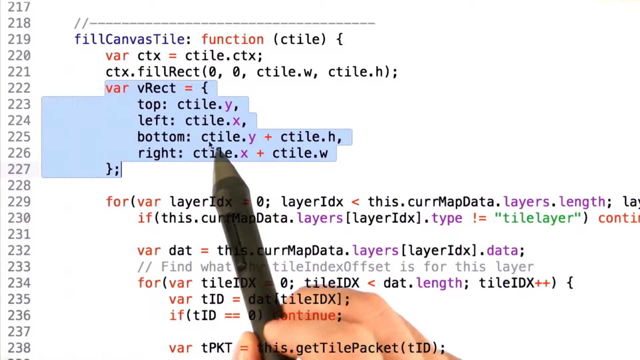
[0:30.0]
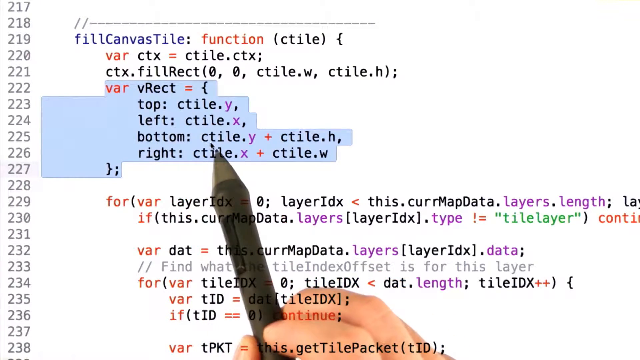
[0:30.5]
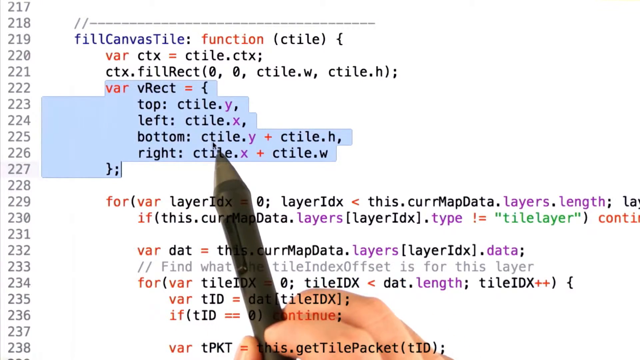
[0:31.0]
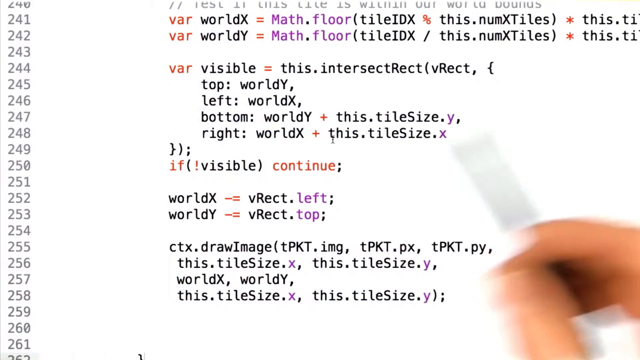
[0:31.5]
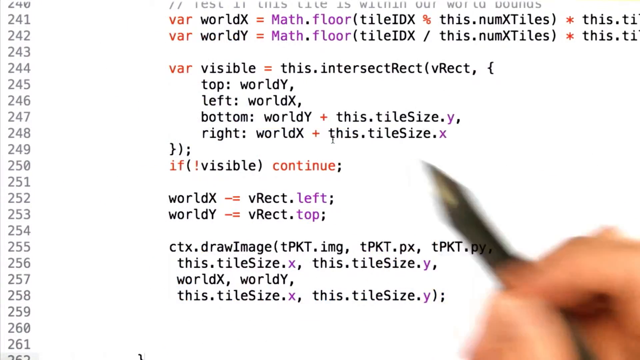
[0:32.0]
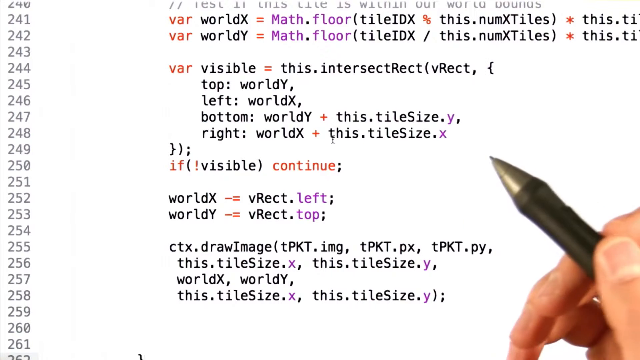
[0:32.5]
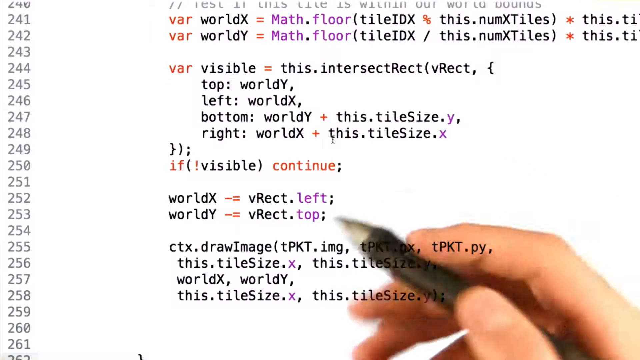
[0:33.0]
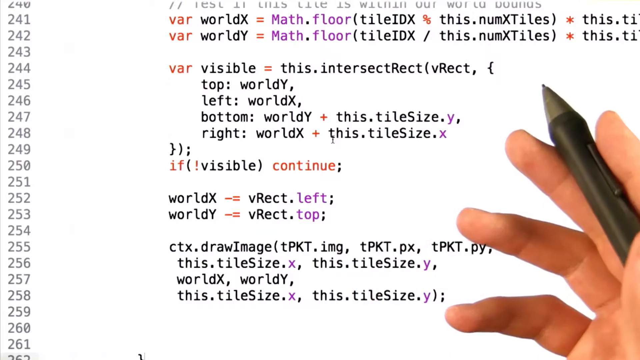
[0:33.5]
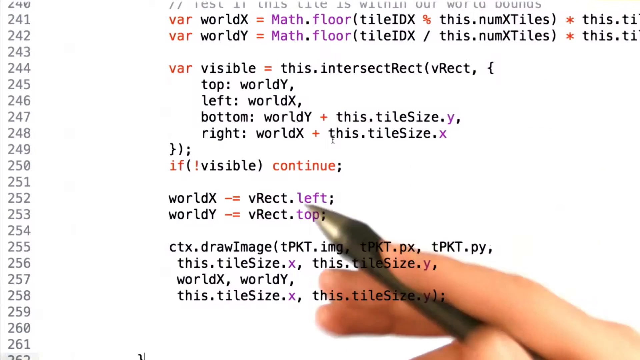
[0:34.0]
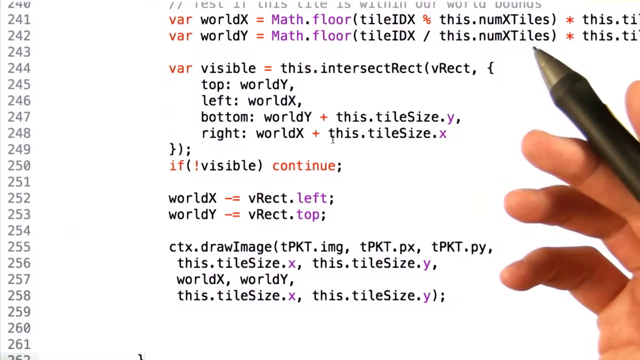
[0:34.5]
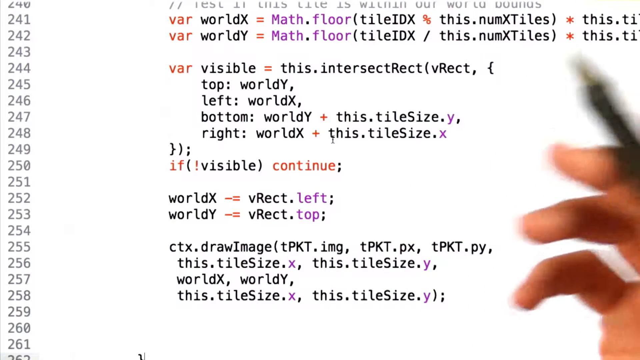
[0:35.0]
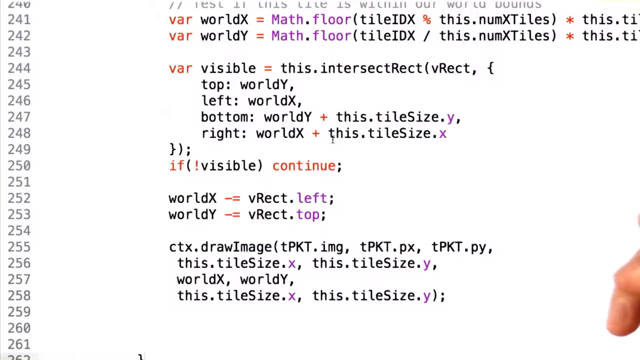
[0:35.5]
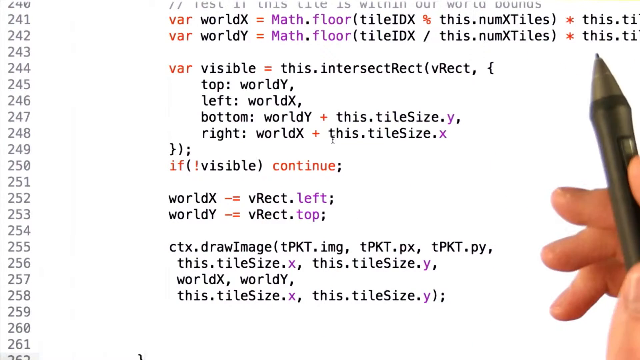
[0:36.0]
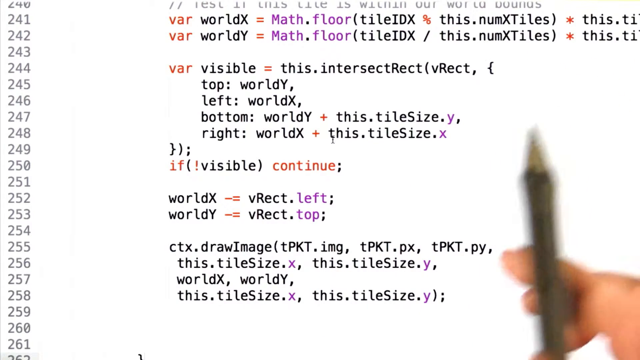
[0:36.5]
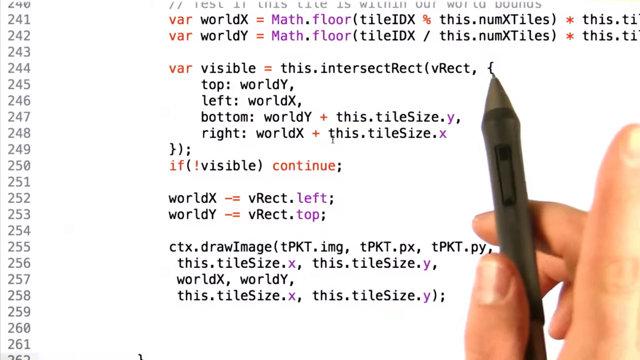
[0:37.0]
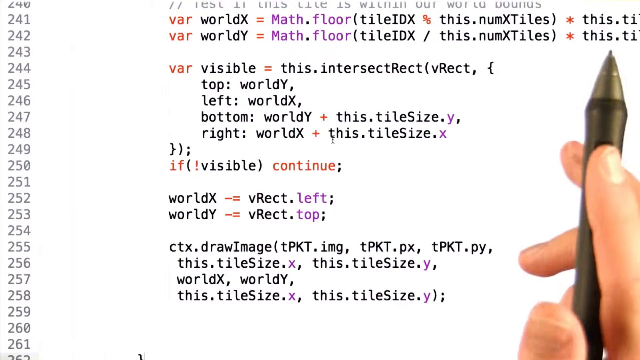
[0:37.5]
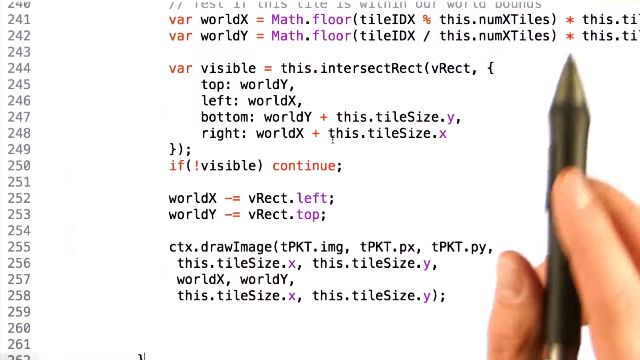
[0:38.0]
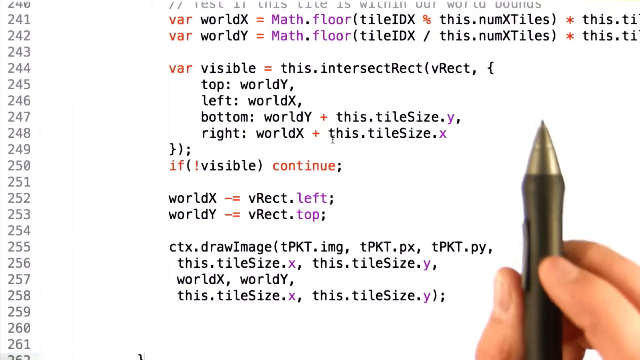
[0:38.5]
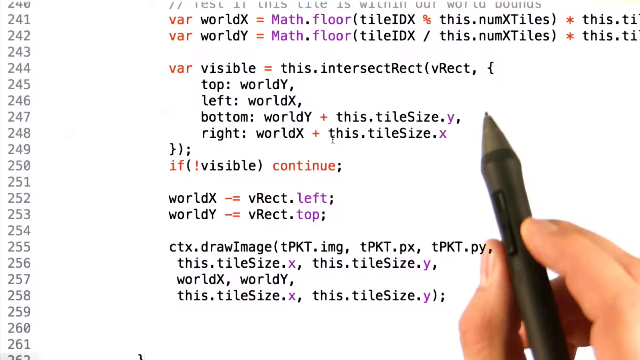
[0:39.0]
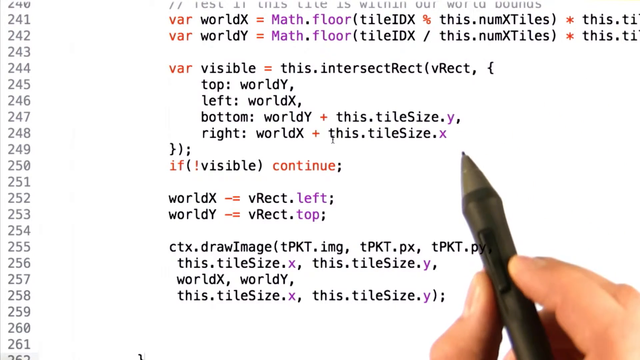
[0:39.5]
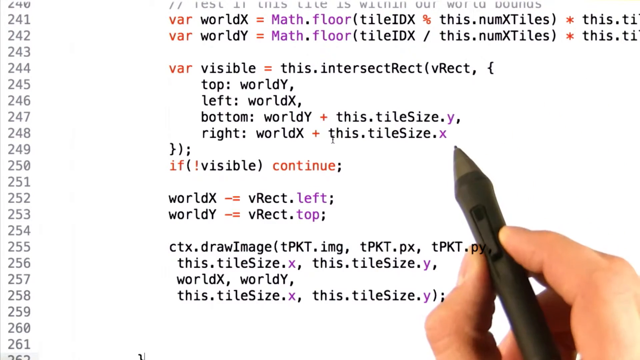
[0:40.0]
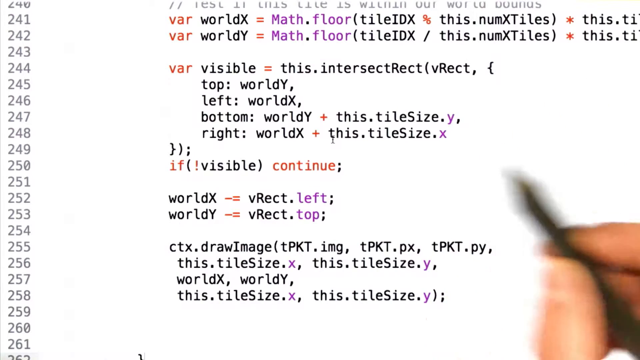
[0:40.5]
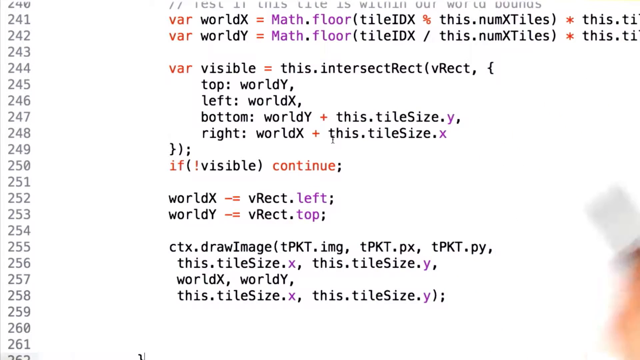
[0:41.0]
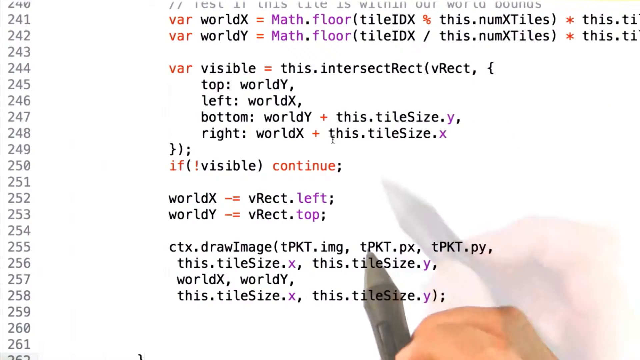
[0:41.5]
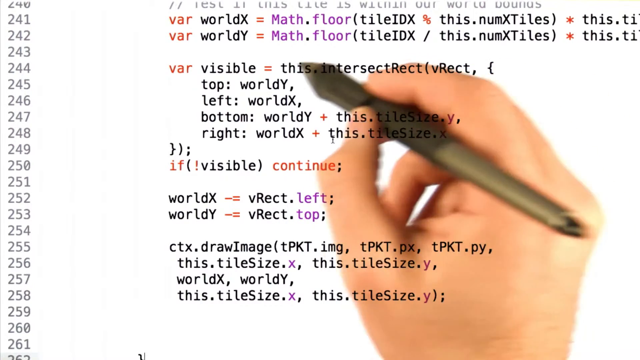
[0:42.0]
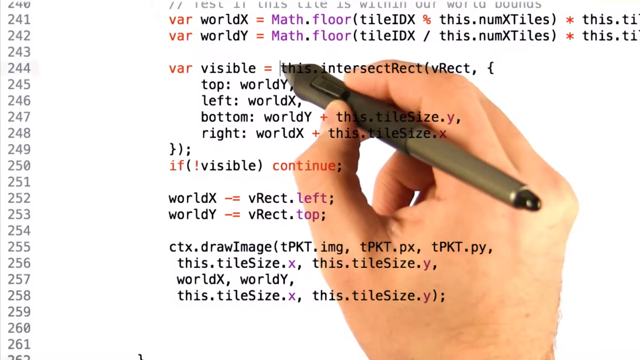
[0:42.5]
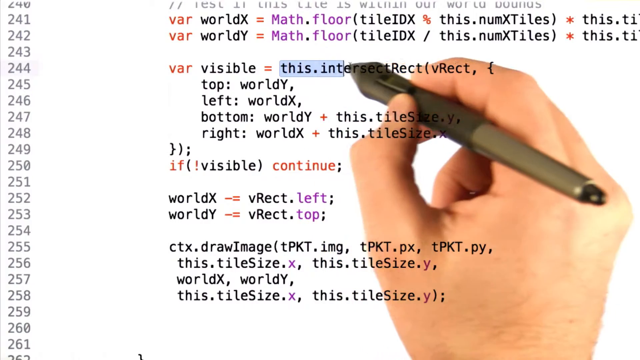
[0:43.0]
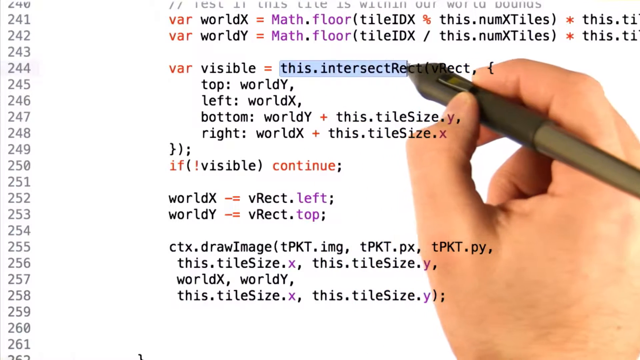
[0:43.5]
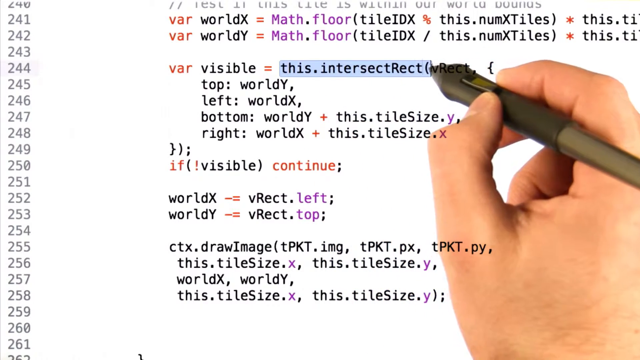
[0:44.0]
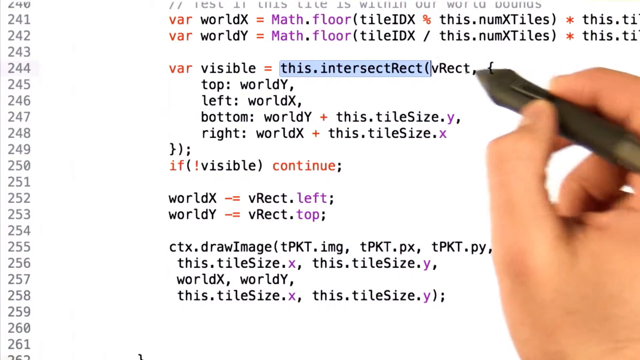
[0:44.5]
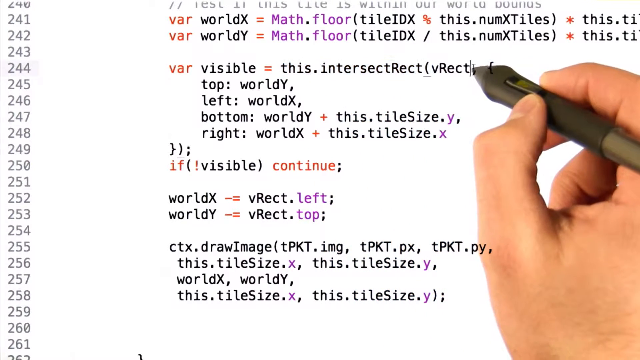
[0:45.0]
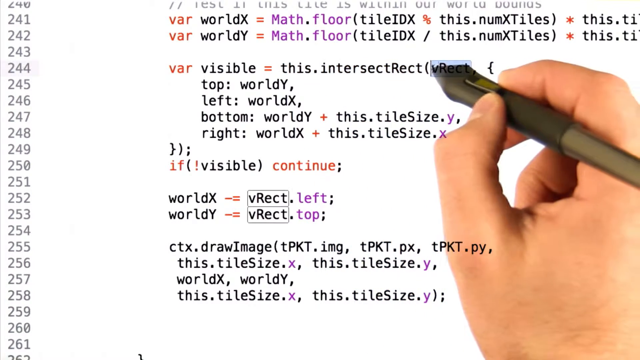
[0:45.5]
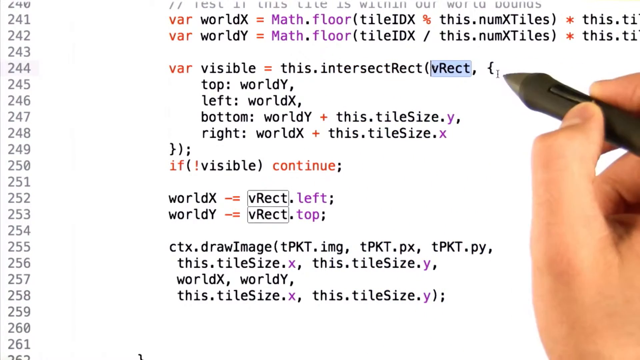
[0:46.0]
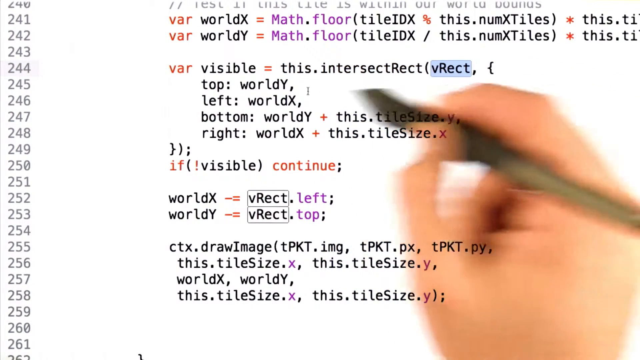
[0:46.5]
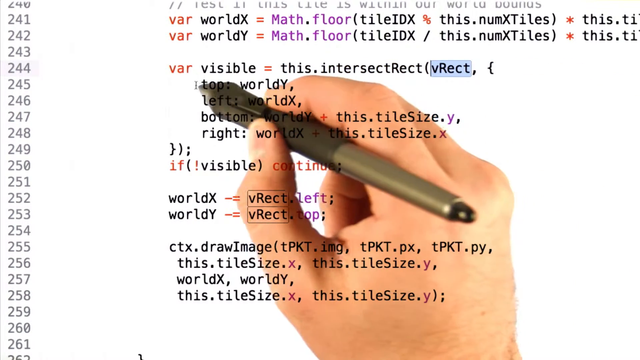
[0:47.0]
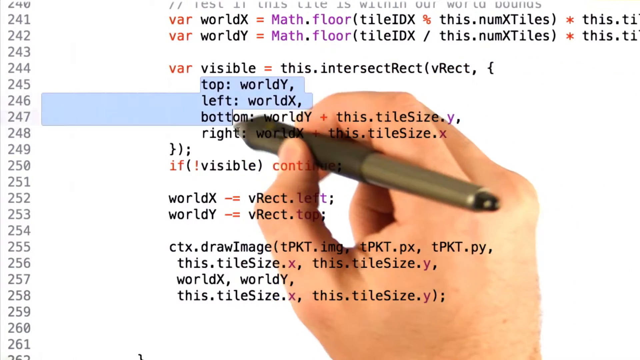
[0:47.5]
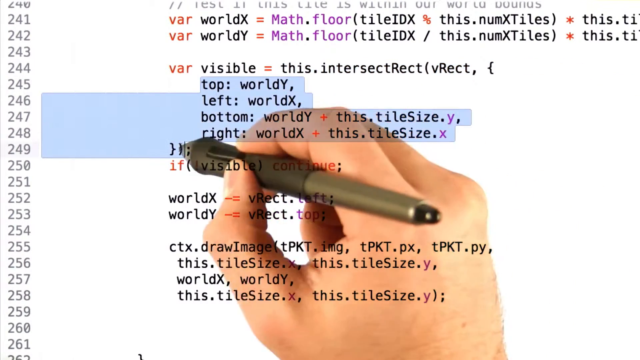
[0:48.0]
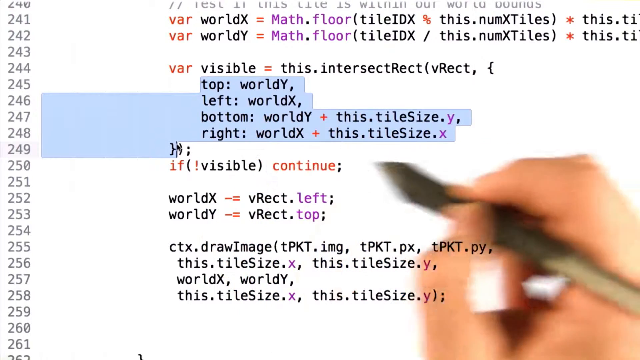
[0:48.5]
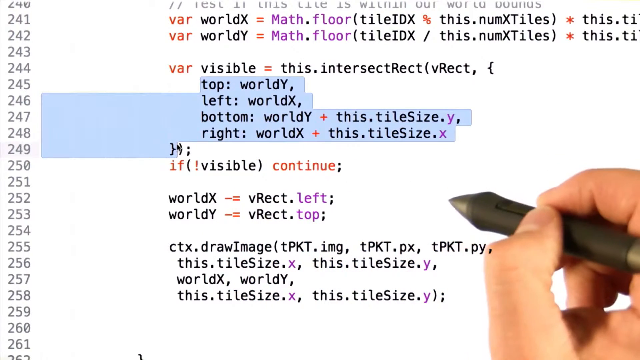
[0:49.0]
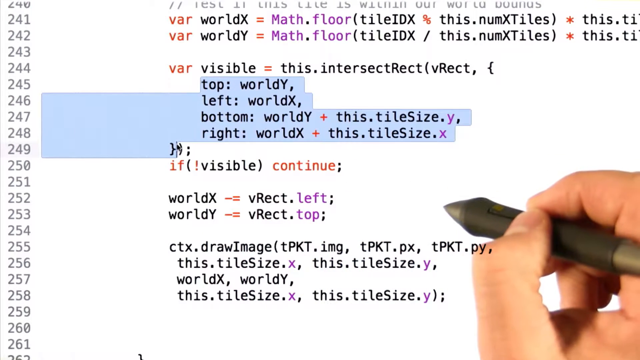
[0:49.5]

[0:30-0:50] The same screen appears, with the same highlighting pen. Words such as "variable" and "this intersect" are highlighted on the screen. The code moves down to line 245, showing "tiles" in the same colors, along with "current map data layers length". A male hand holding a black pen highlights text on the screen; it seems to be a coding tutorial of some sort. Nothing else appears to be going on. Other text on screen reads "world, draw image, this, tile size, this intersect, this num, tile intersect, layer, current map data, layers, length, tile layer, type, layers, layers".